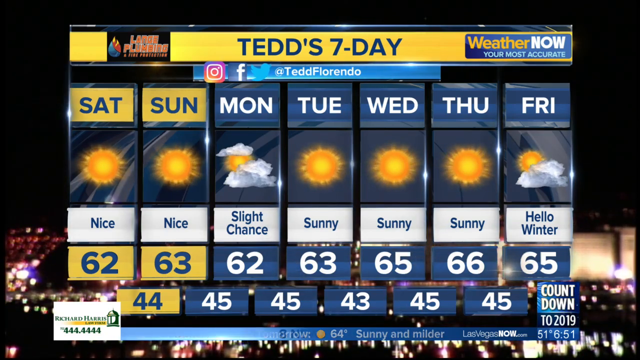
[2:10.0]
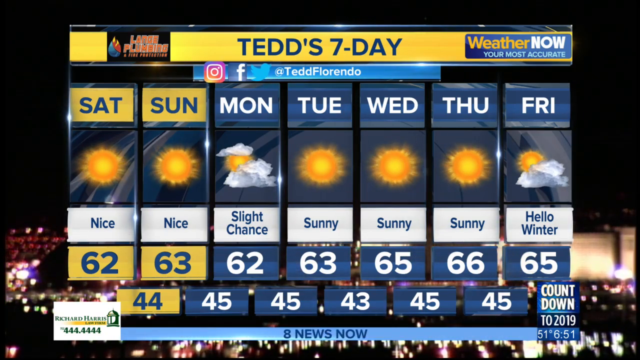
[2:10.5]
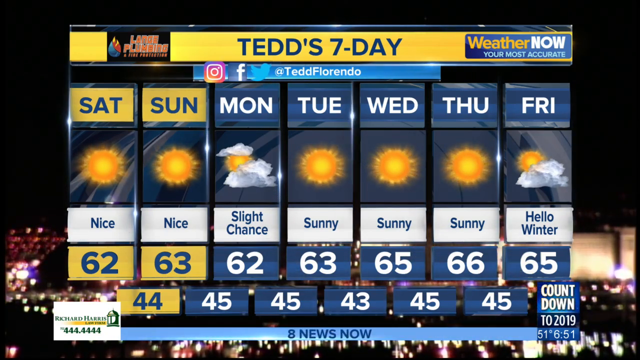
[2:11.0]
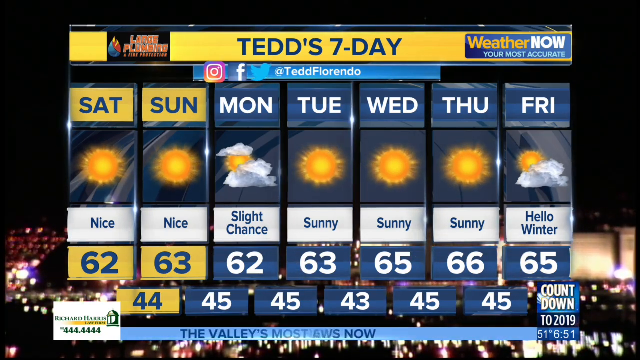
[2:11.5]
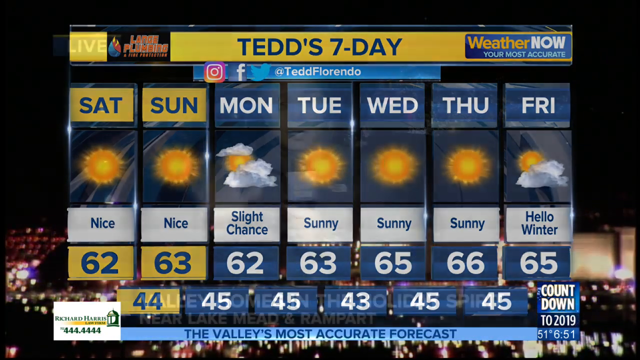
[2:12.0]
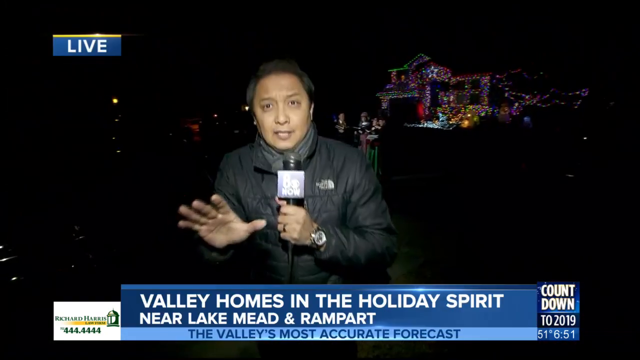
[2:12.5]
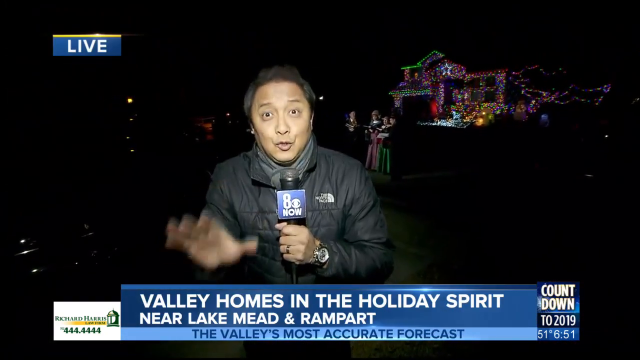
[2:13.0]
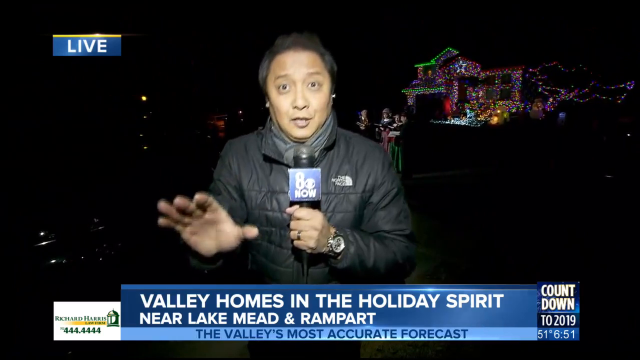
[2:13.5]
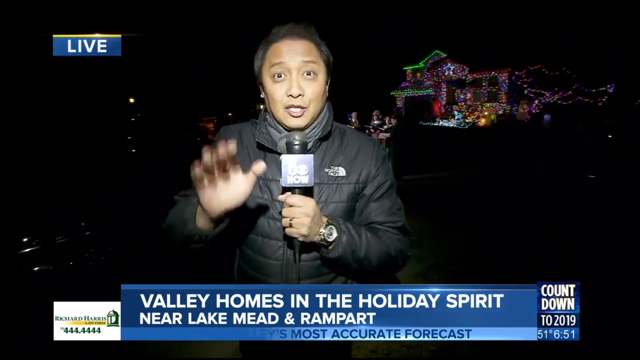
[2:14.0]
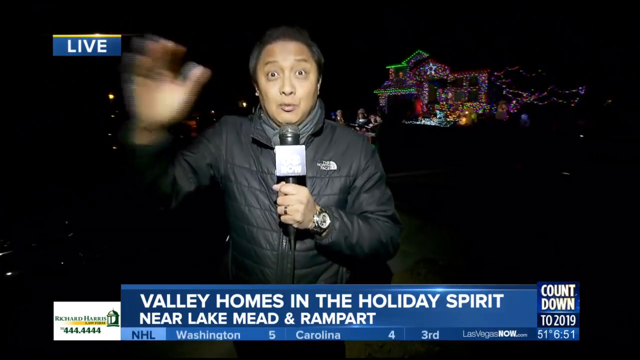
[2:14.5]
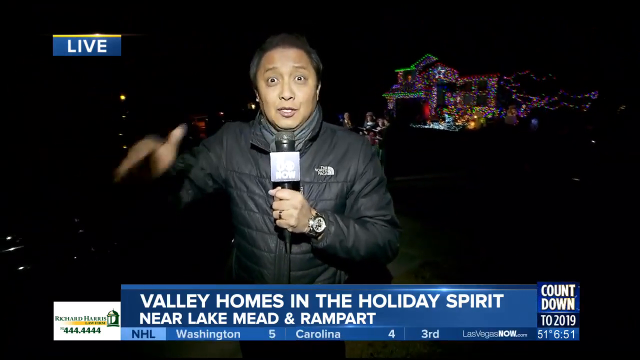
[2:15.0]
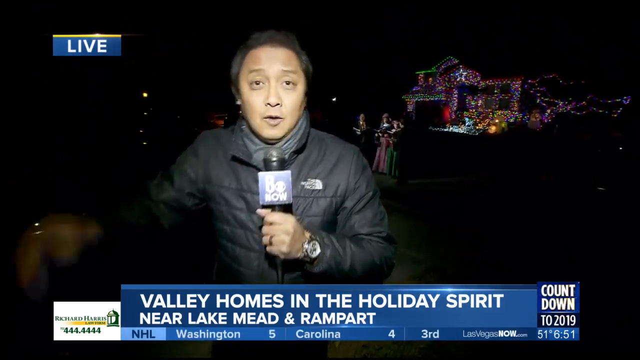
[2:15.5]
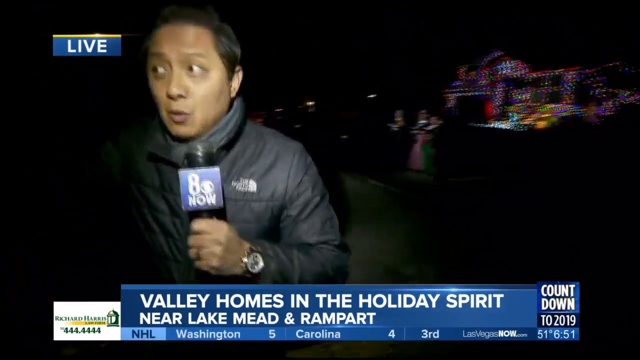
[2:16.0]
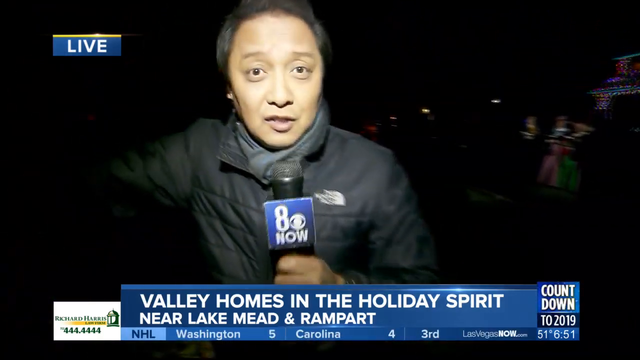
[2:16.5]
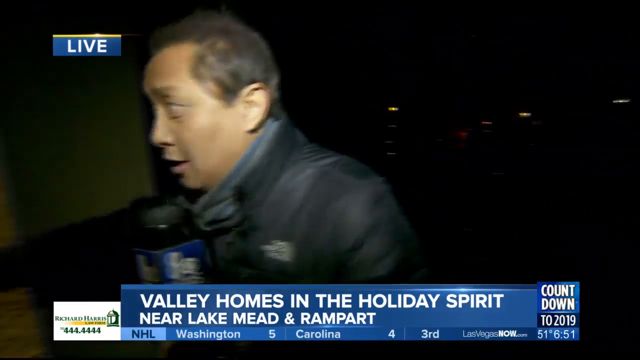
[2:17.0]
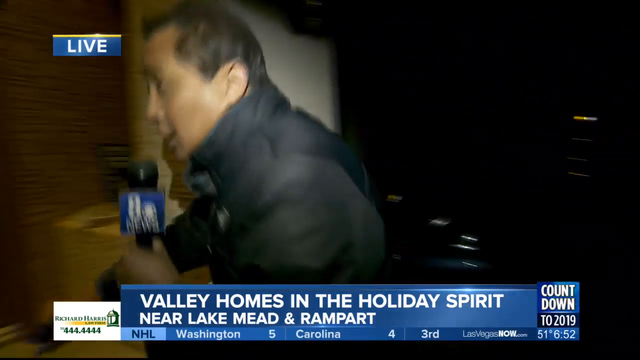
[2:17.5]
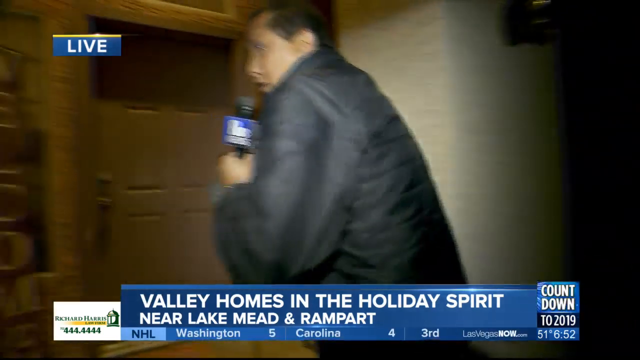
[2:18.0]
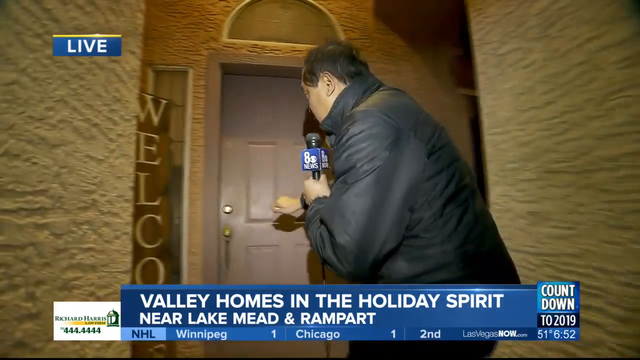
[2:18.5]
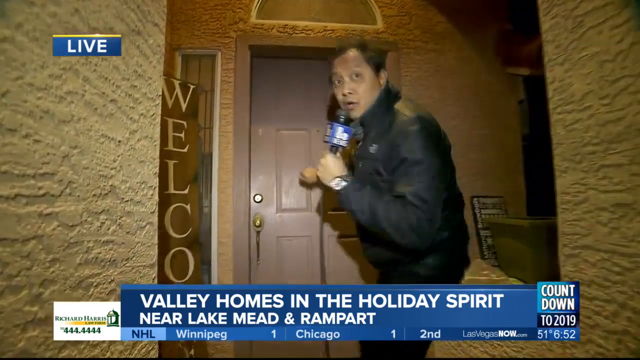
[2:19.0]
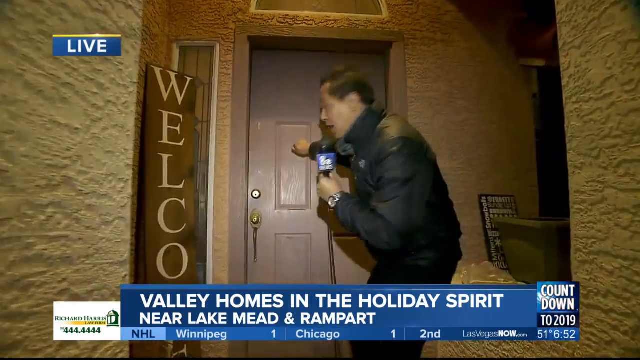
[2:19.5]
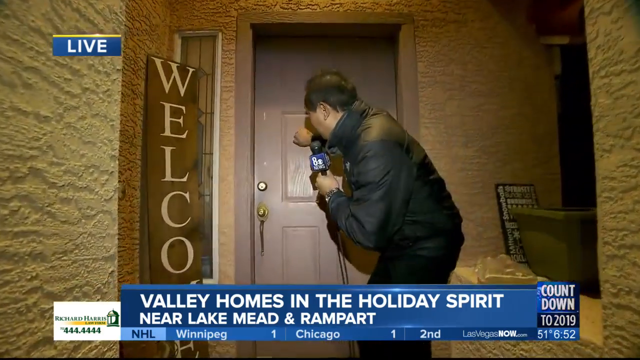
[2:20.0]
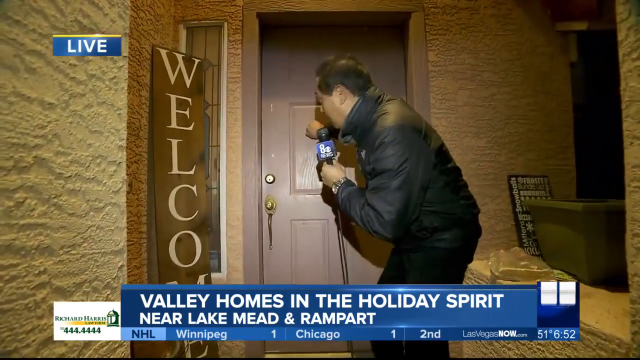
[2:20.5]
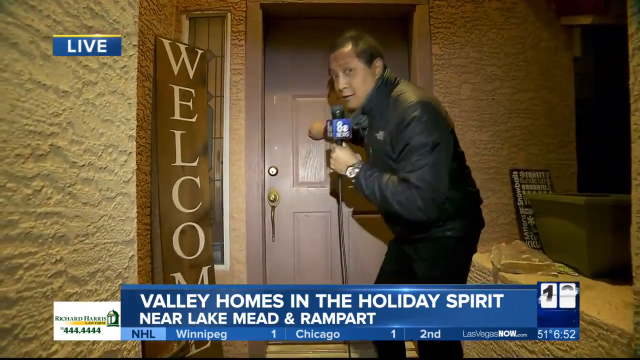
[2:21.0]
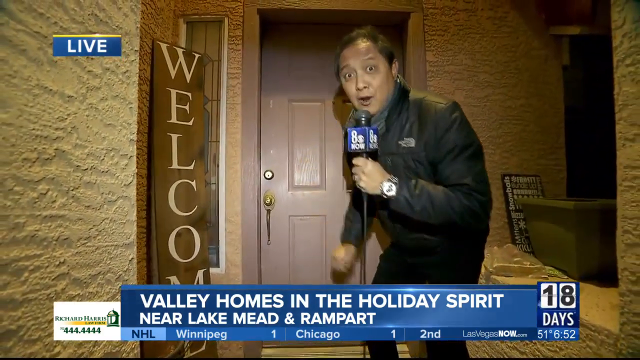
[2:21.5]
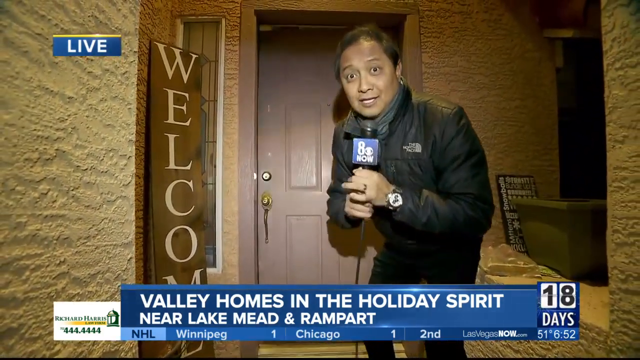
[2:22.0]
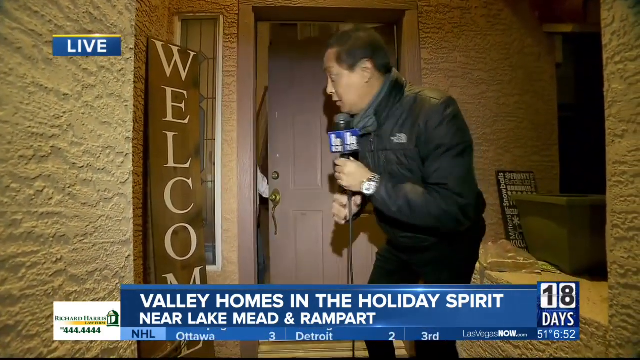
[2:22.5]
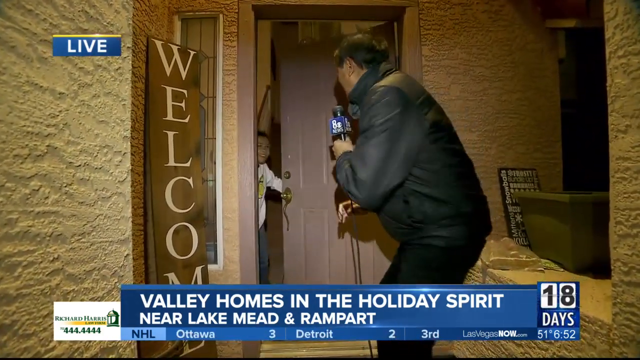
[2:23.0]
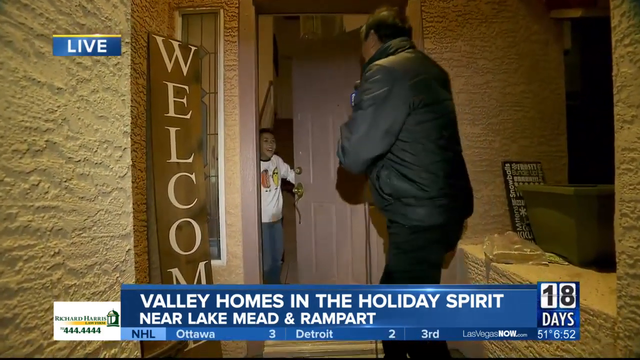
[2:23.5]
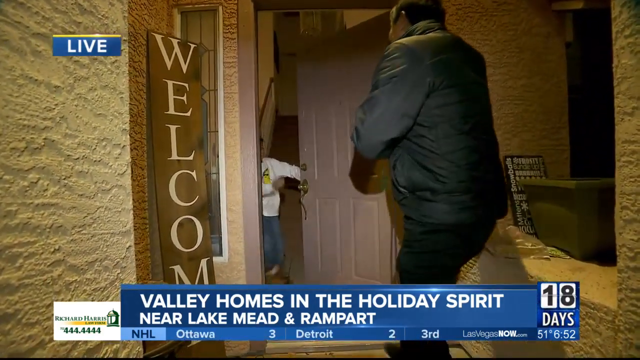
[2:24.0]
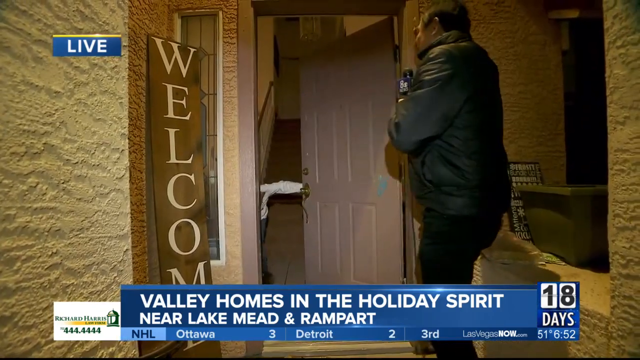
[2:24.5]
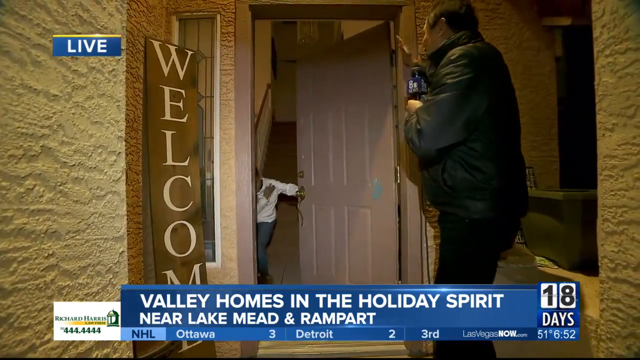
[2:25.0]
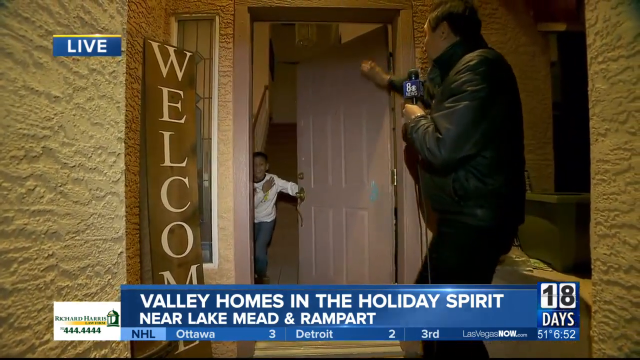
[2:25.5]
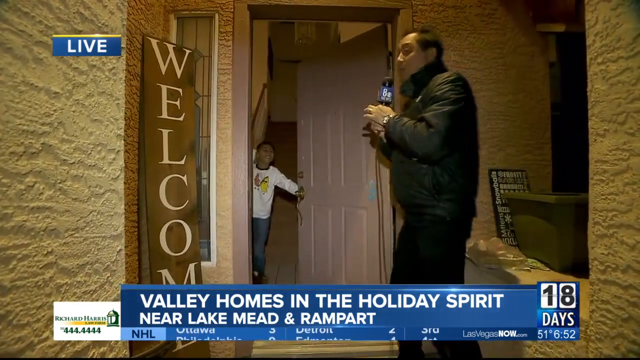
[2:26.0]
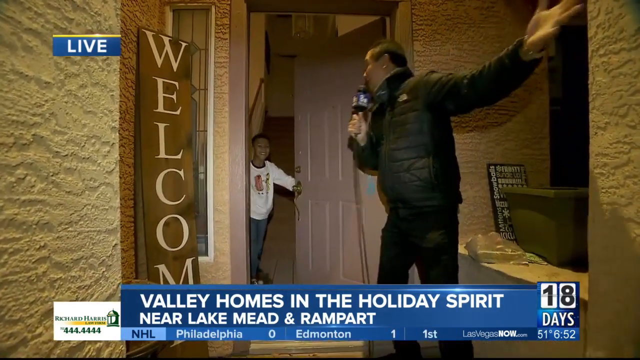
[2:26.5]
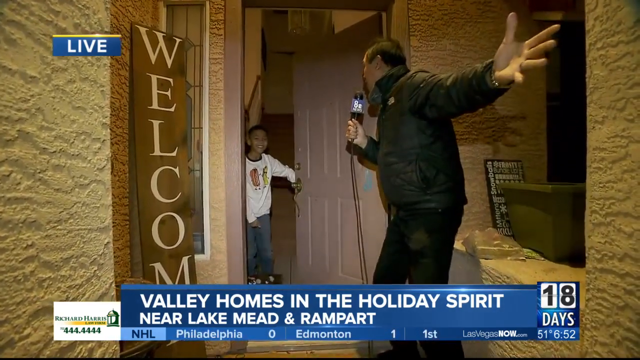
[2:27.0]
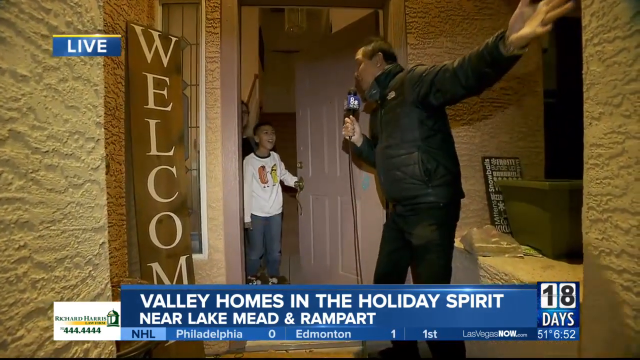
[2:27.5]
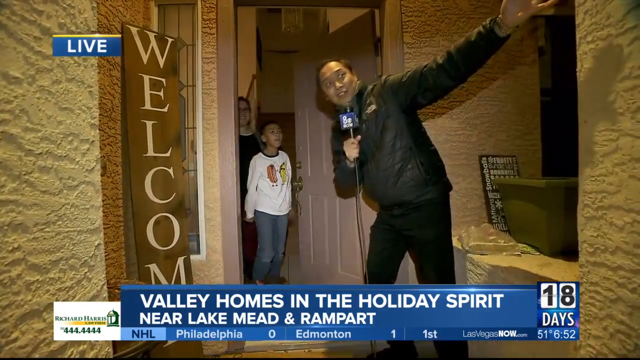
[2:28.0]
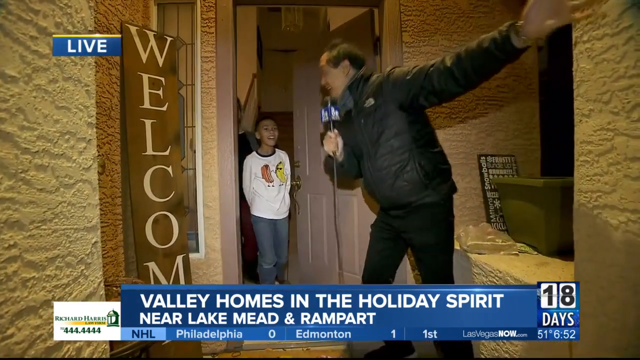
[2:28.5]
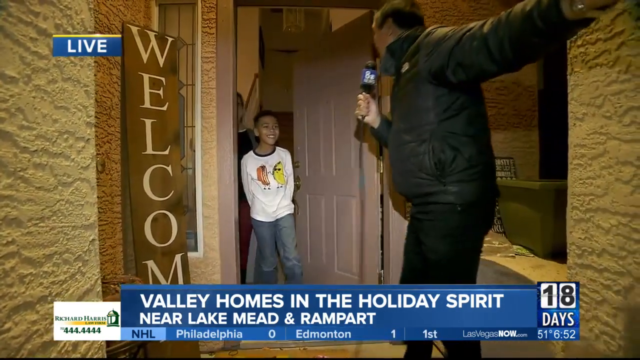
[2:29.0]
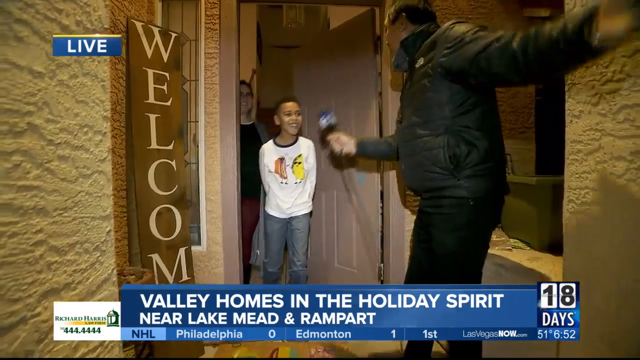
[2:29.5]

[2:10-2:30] The seven-day slide continues, then quickly animates back to the roving reporter. He talks straight to camera, dressed very warmly in a black North Face jacket and a grey scarf, his hands in the air; he seems extremely animated. The graphic at the bottom still says "Valley Homes in the holiday spirit near Lake Mead and Rampart", but now a box on the right side next to it says "countdown to 2019", with "51 degrees" and "6 51" underneath. The reporter then runs towards a different house with a blue front door; little of the house is visible apart from the door and a welcome sign next to it. He knocks on the door while talking into the microphone. A child opens the door, looking extremely surprised and happy to see the reporter. The reporter gestures to the house across the street and the carol singers, and the child steps out of his front door.